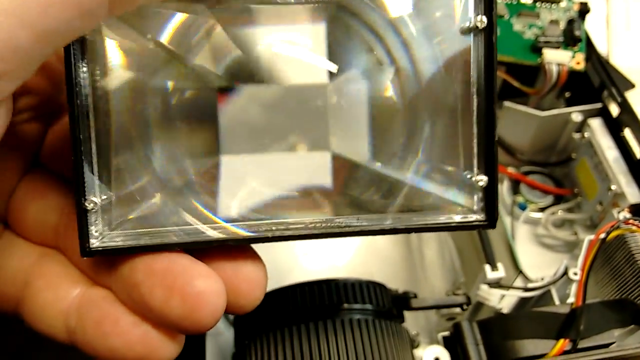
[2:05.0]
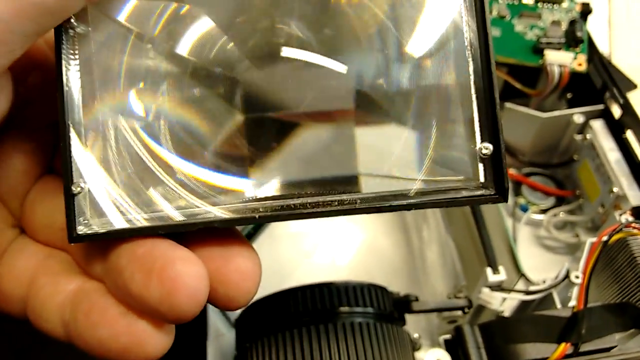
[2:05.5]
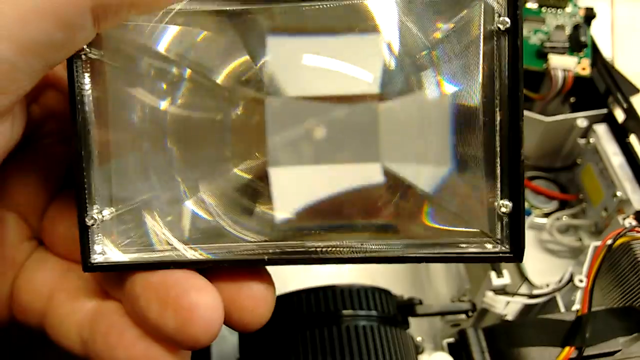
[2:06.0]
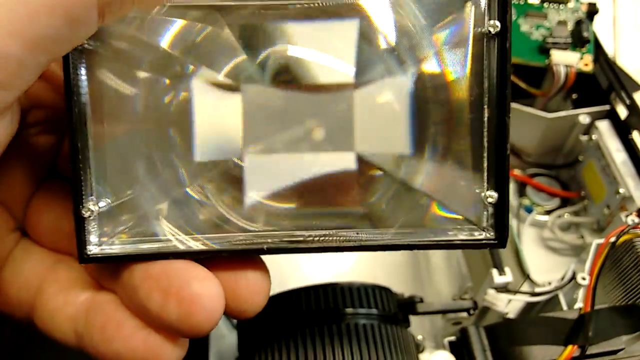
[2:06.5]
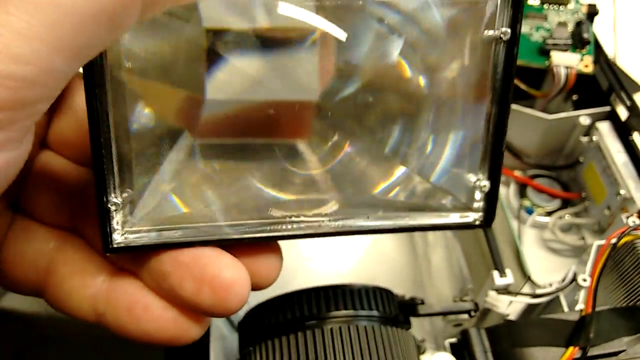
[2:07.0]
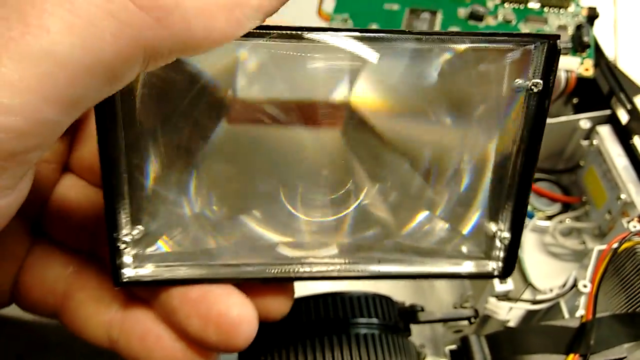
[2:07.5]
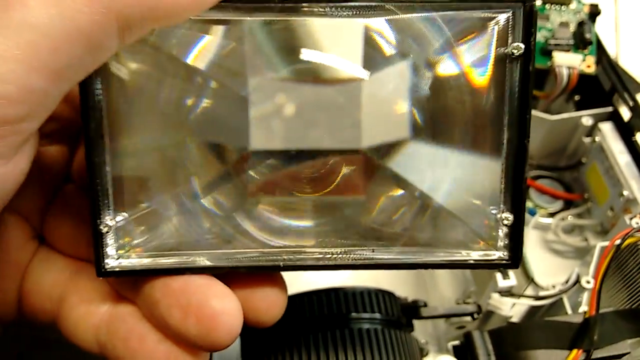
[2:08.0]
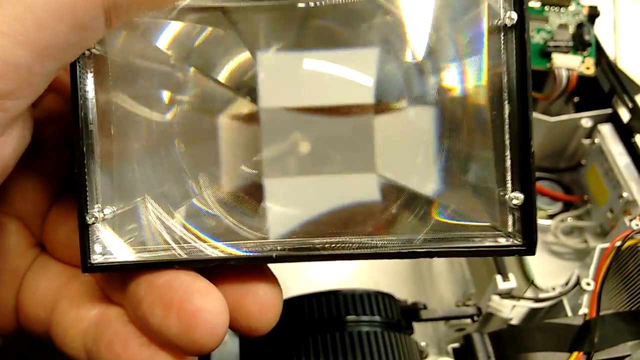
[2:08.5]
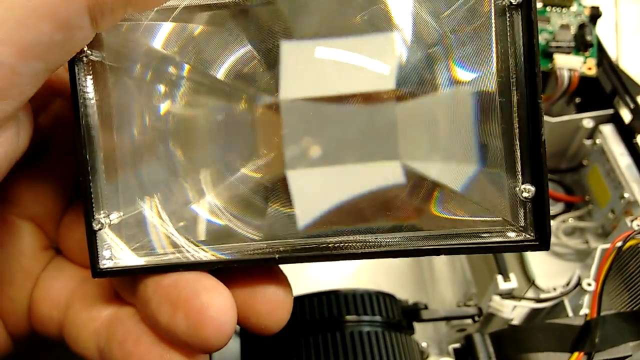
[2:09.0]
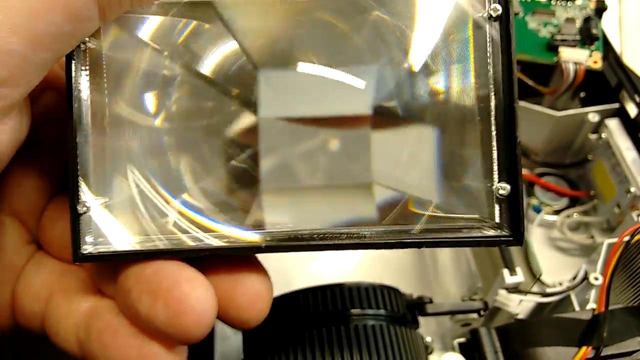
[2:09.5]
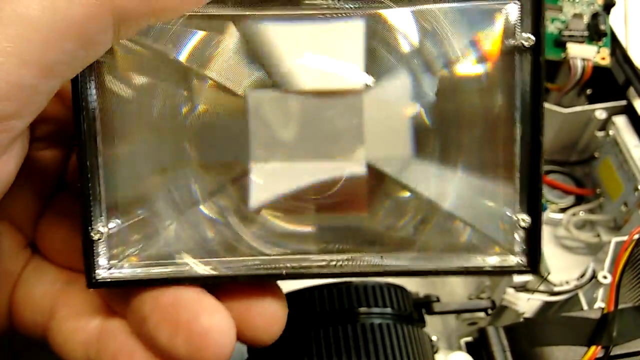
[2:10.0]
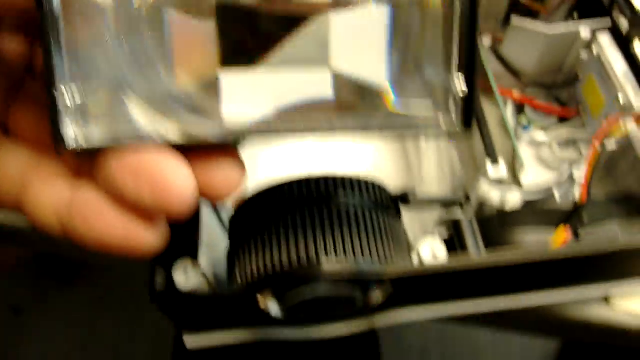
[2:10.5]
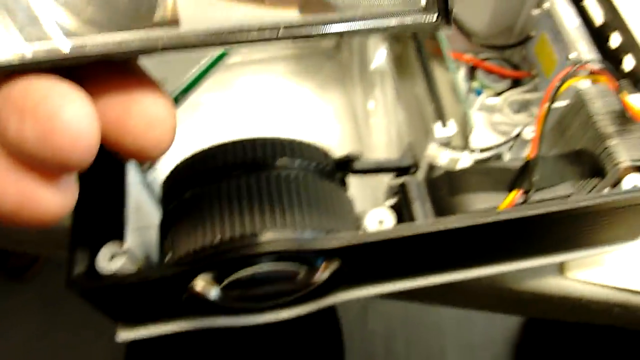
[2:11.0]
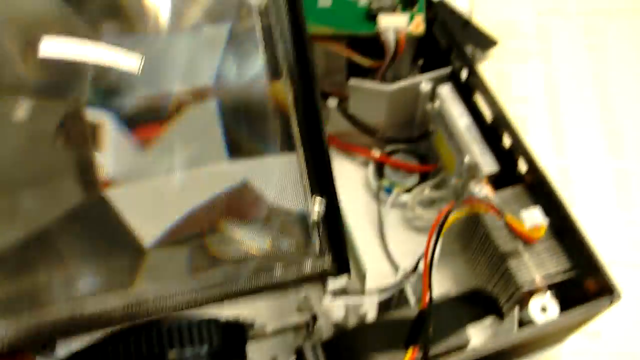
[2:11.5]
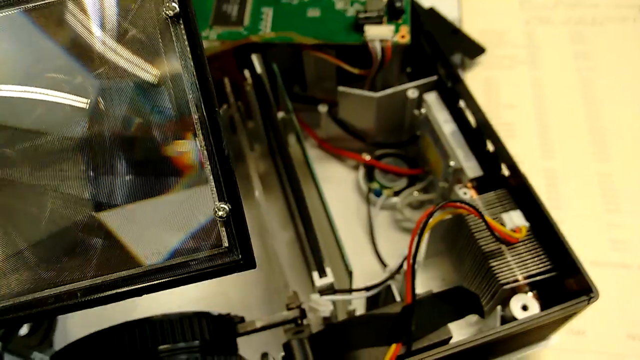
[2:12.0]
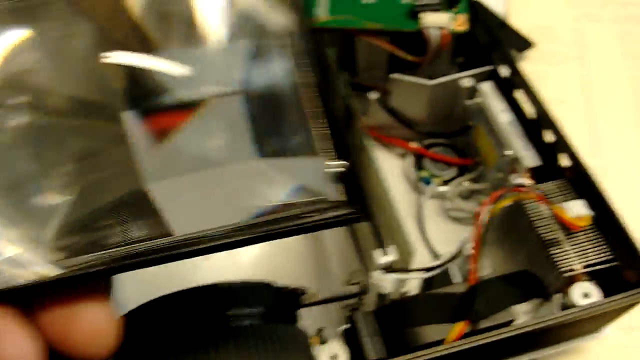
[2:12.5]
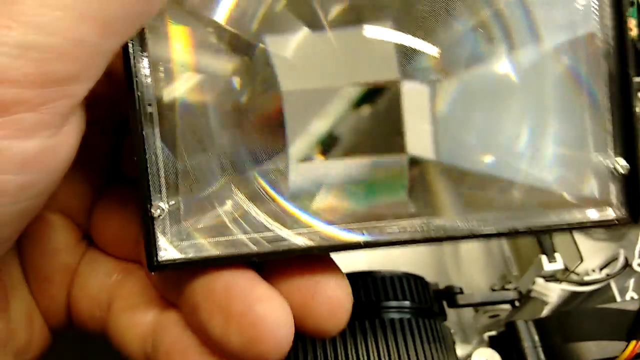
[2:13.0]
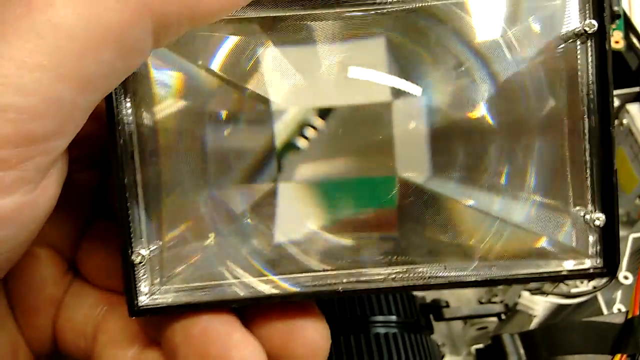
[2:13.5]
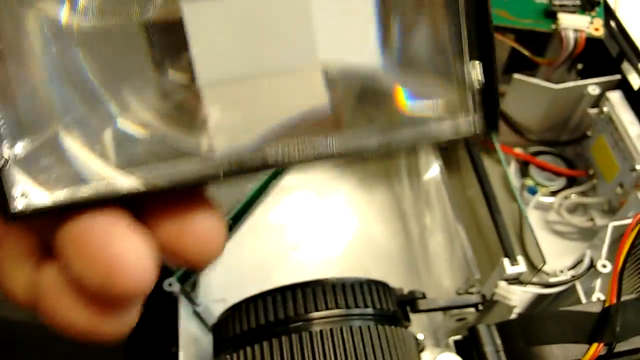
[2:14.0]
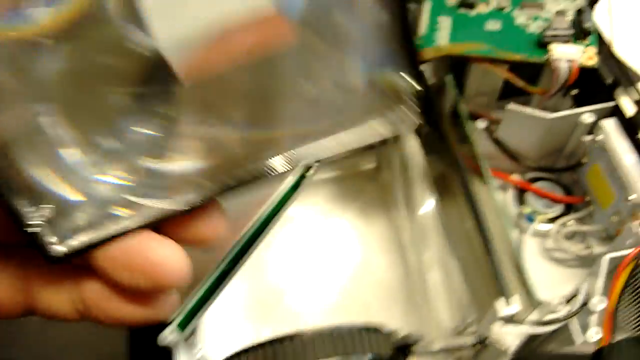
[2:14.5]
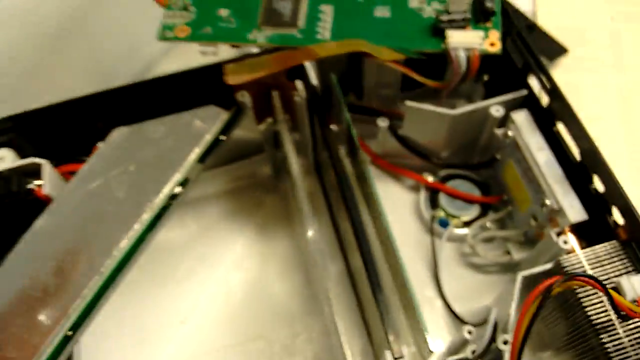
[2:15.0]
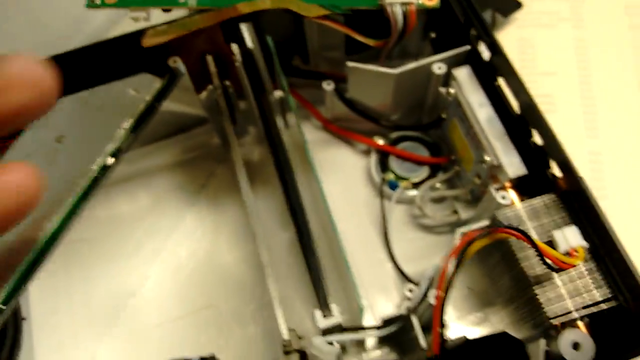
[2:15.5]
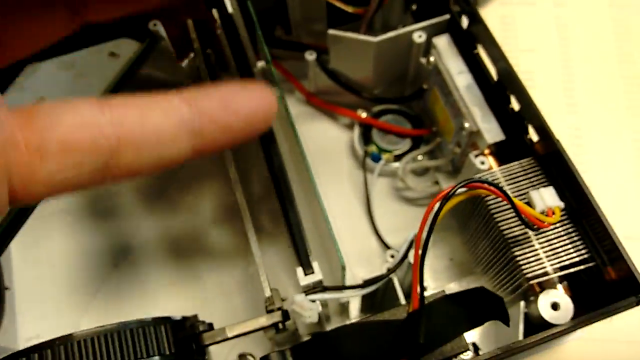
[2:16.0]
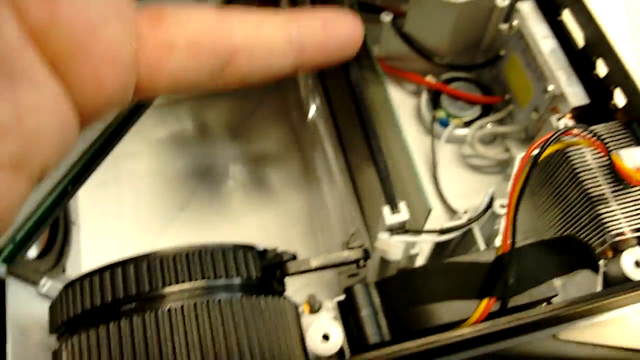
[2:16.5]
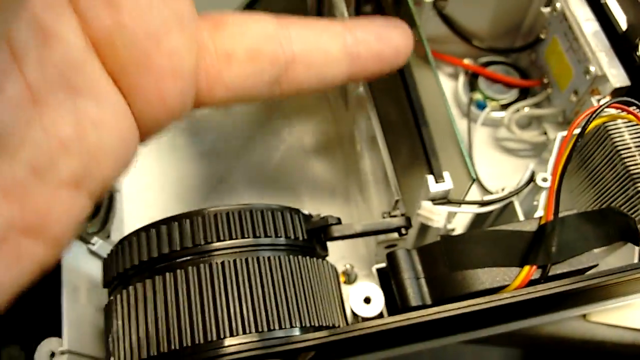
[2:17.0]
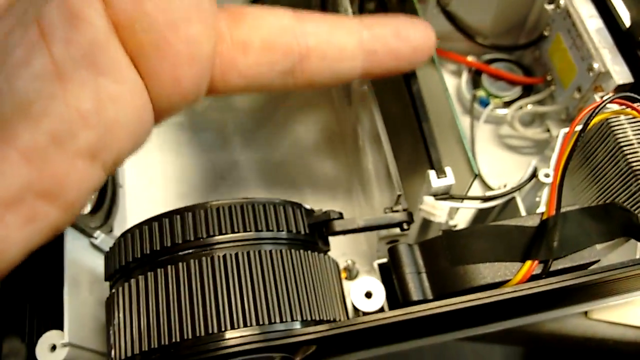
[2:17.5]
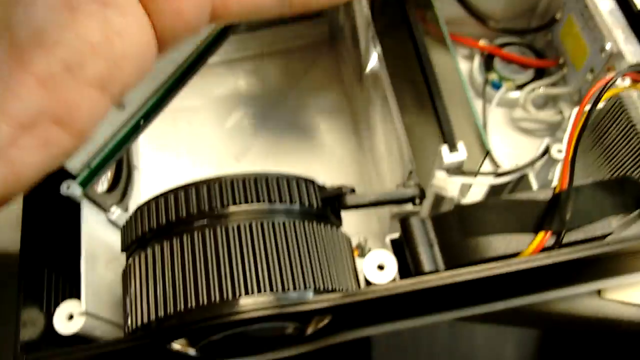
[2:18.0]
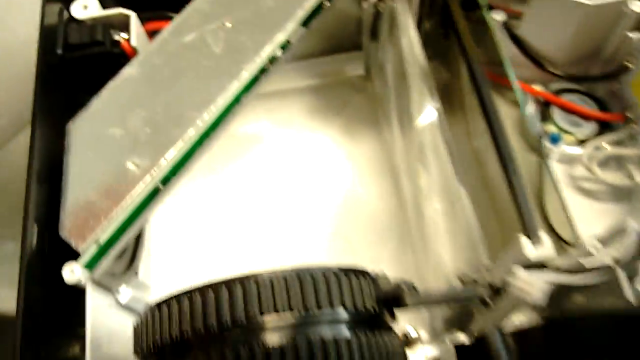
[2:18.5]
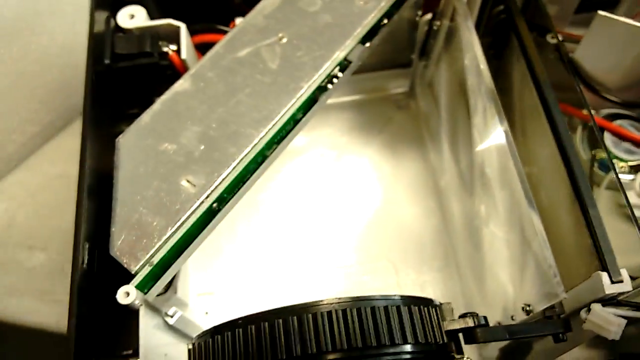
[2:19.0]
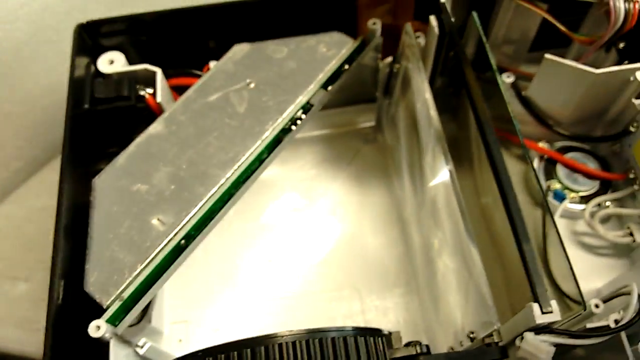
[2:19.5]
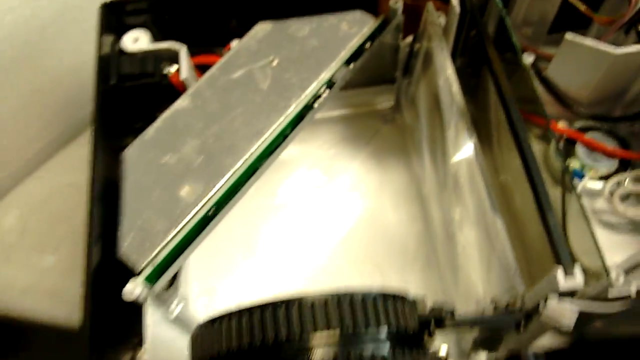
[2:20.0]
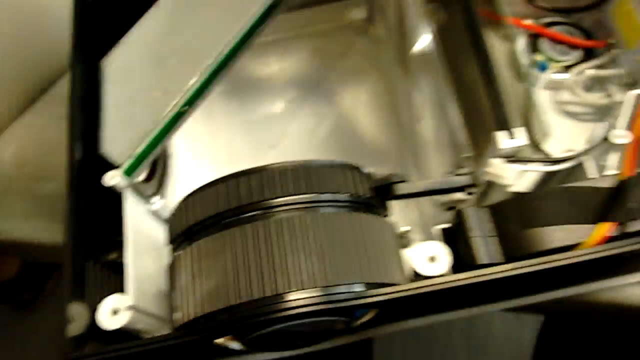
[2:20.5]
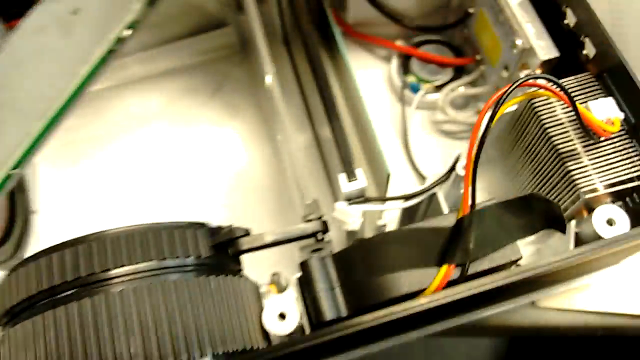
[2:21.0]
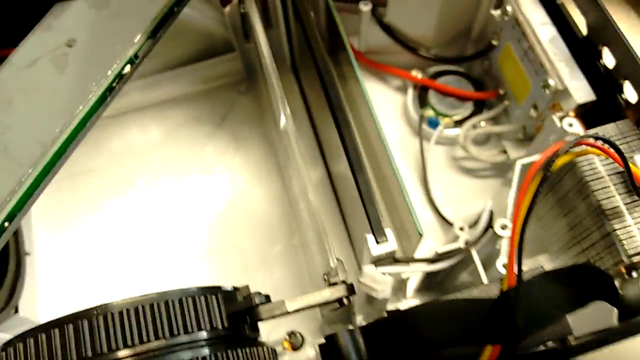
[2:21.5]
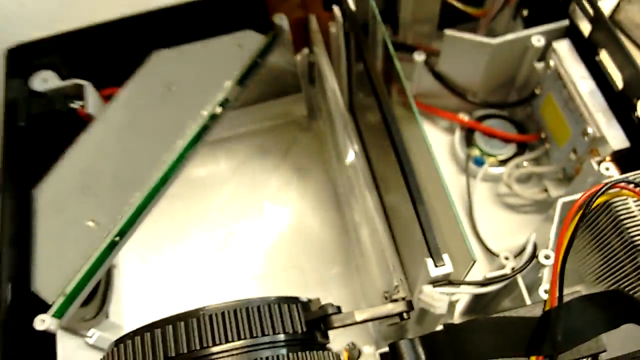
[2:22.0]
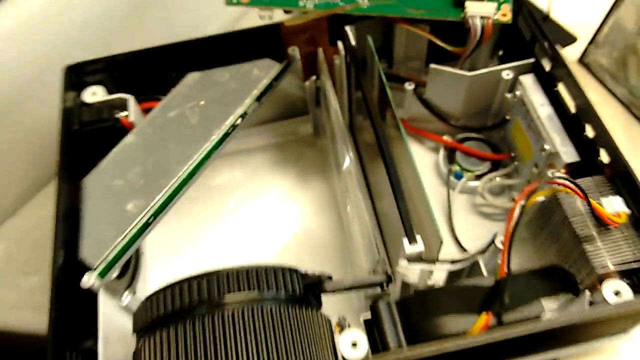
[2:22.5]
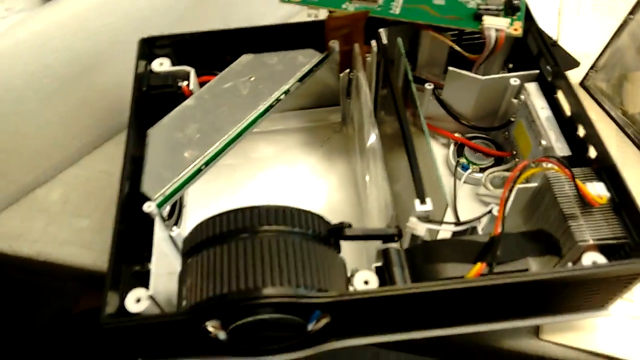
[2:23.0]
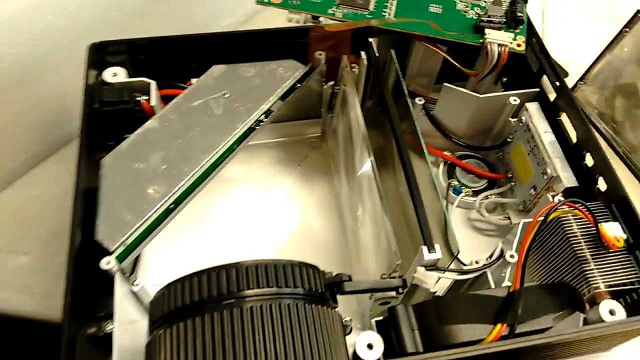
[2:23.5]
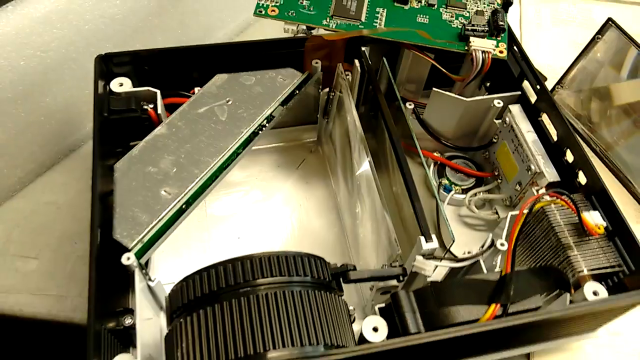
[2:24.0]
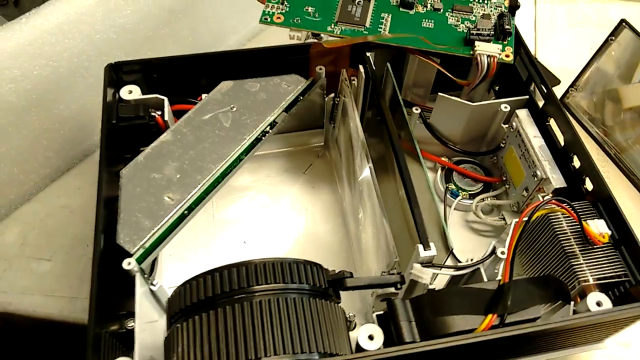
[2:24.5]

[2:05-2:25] The hand of a white Caucasian male holds the triangular lens device that was inside the machine, and the camera zooms in on it. The camera zooms in and out on the shape of the whole box to show what the box itself looks like. He then touches the parts he had moved left and right before. The focus is more on the object in his hand than on the box itself.